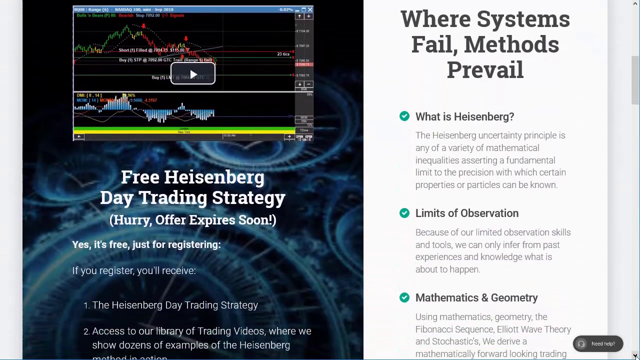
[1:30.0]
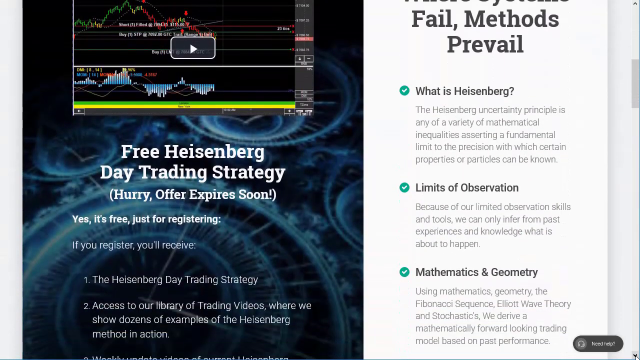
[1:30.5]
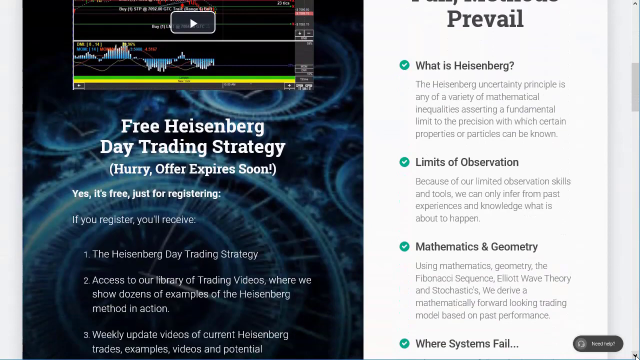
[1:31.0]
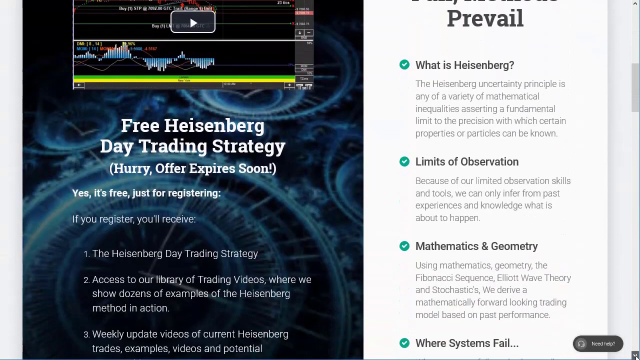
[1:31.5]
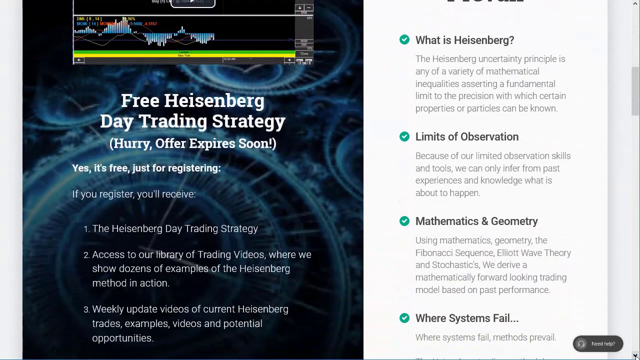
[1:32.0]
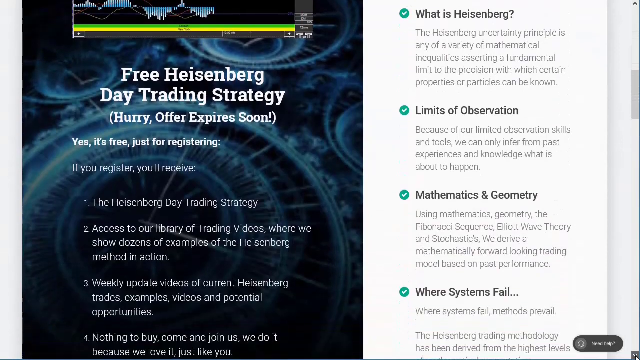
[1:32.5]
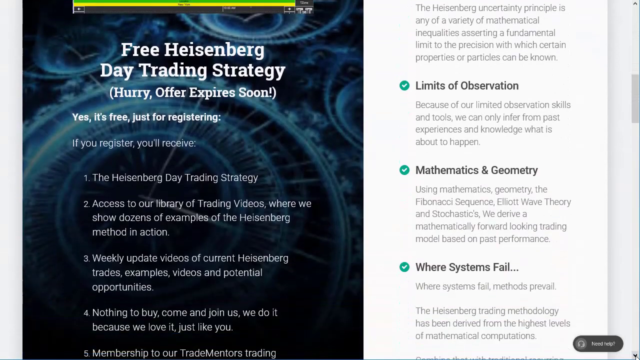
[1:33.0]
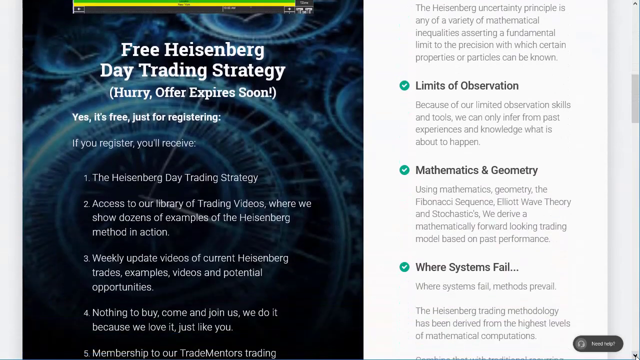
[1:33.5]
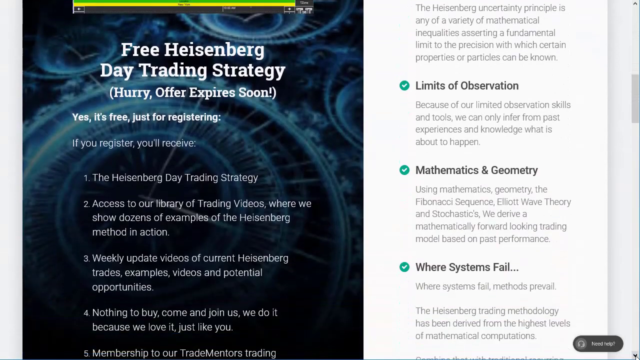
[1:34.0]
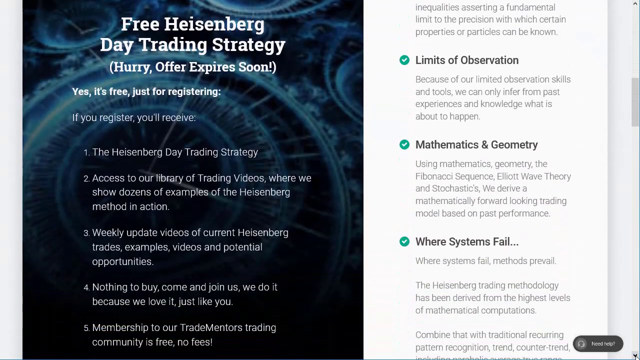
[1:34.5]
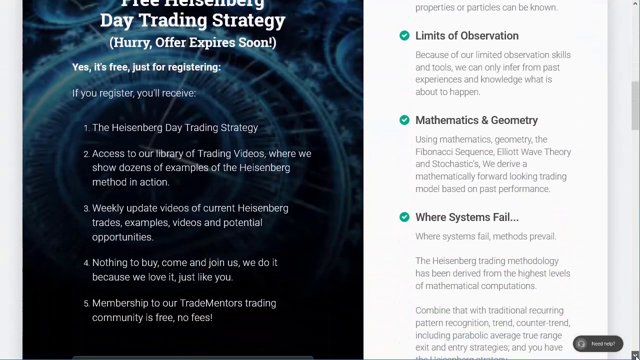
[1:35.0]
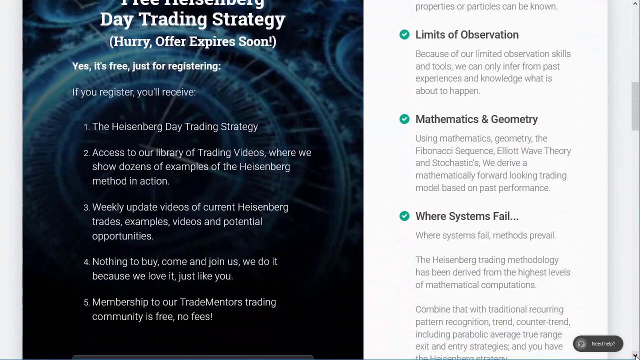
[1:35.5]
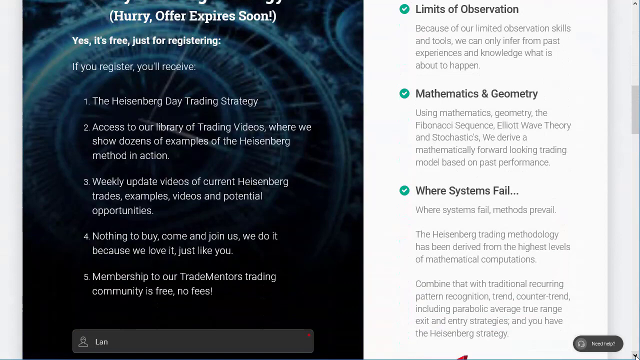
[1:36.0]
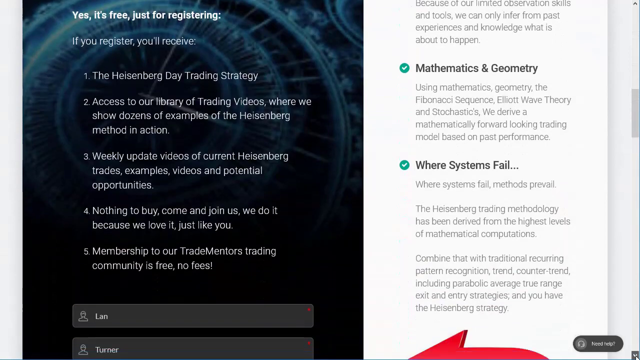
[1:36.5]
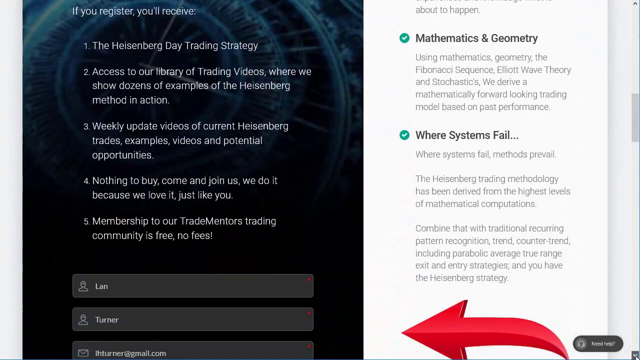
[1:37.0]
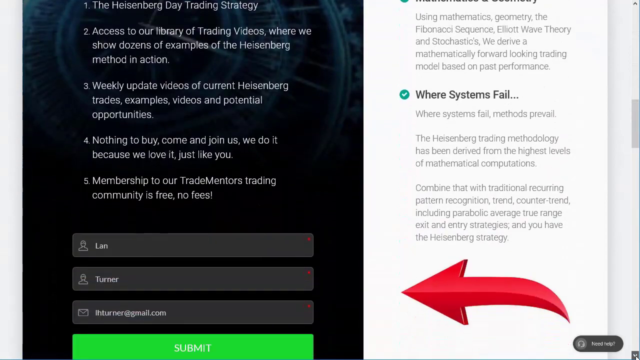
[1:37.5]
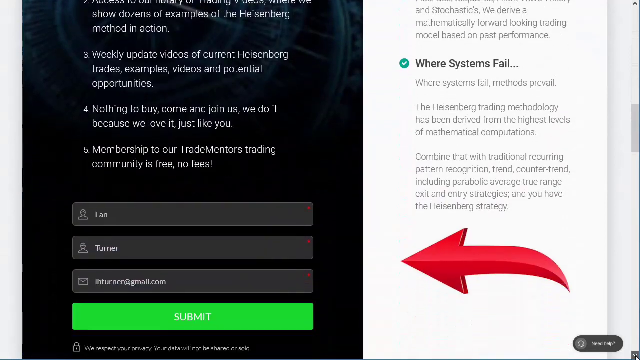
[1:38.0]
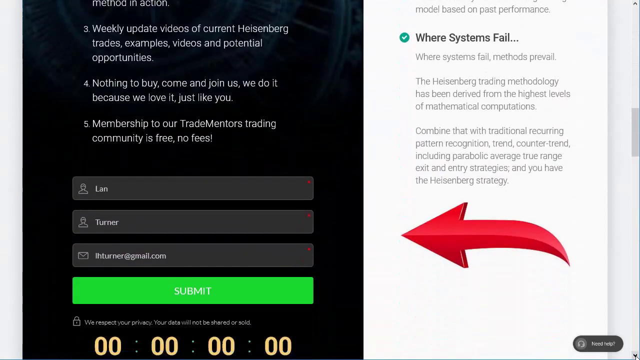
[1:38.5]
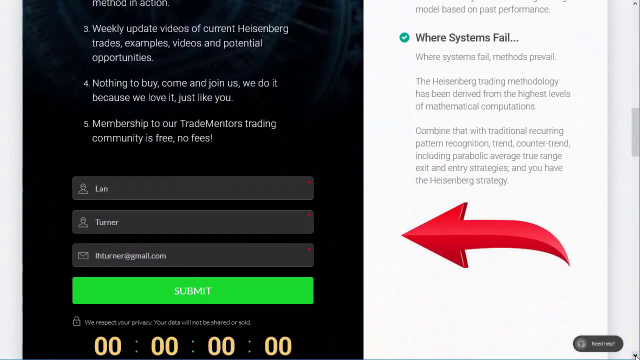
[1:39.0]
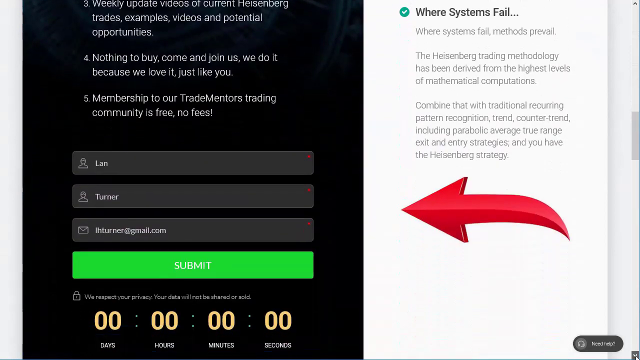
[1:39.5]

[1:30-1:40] What may be a website or a page from a website is shown. On the right side, the words "where systems fail, methods prevail" appear in large black font. Below them is the text "What is Heisenberg? The Heisenberg uncertainty principle is any of a variety of mathematical inequalities asserting a fundamental limit to the precision with which certain properties or particles can be known." Below that is "limits of observation", with text reading "because of our limited observation skills and tools we can only infer from past experiences and knowledge what is about to happen." Toward the left side are the words "Free Heisenberg Day Trading Strategy. Hurry, offer expires soon."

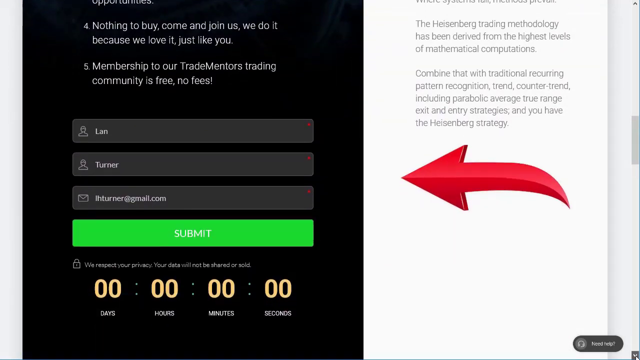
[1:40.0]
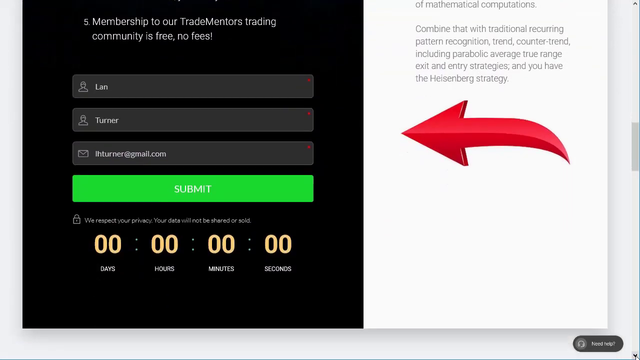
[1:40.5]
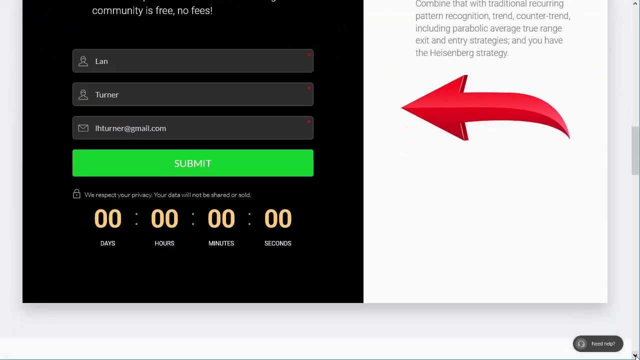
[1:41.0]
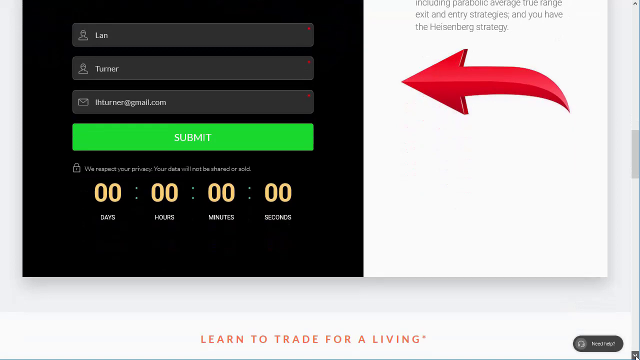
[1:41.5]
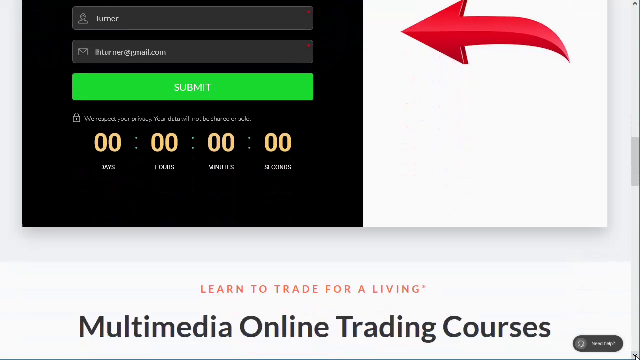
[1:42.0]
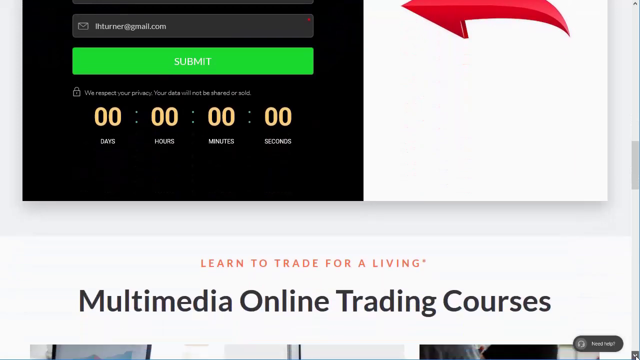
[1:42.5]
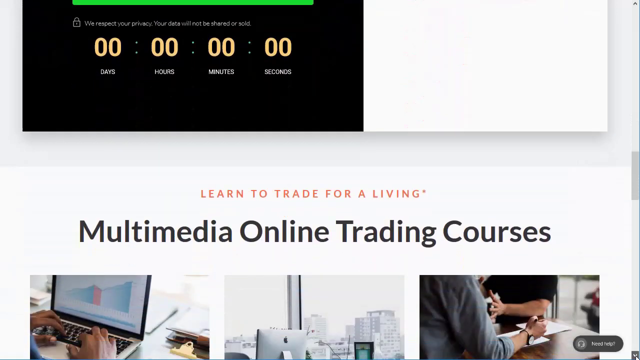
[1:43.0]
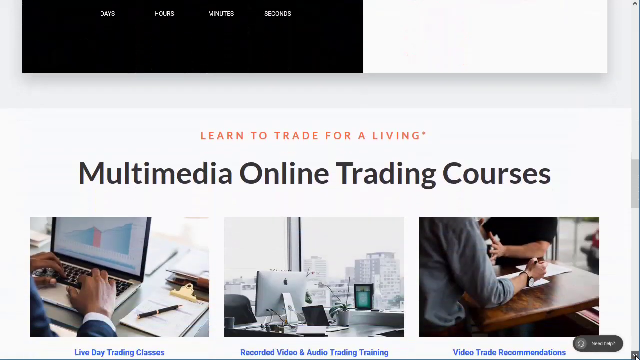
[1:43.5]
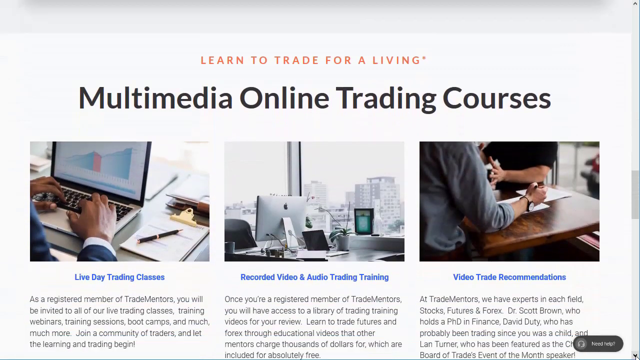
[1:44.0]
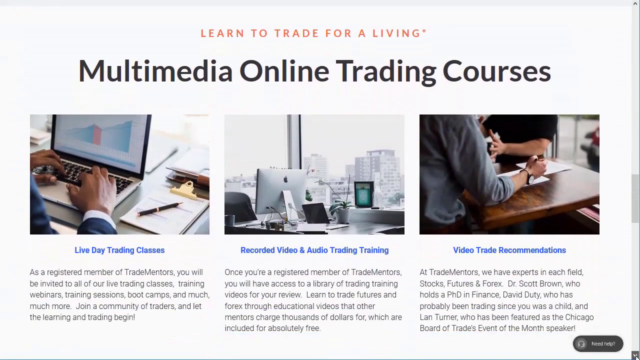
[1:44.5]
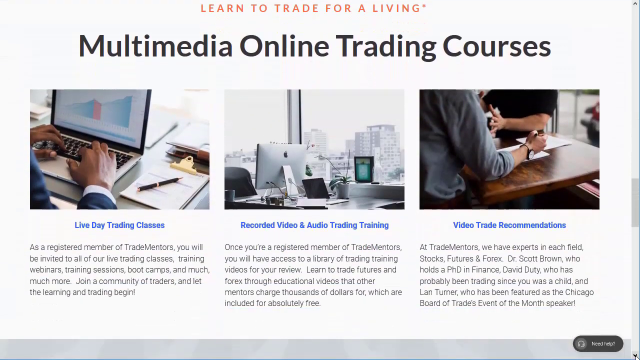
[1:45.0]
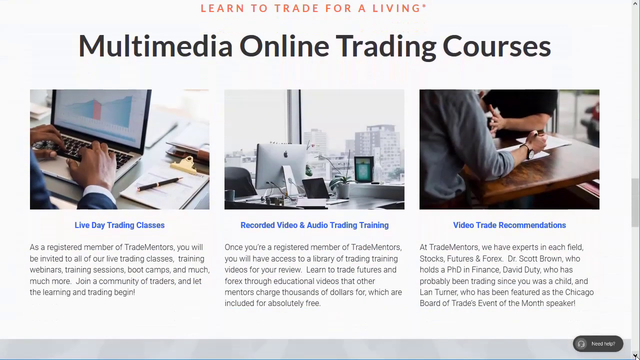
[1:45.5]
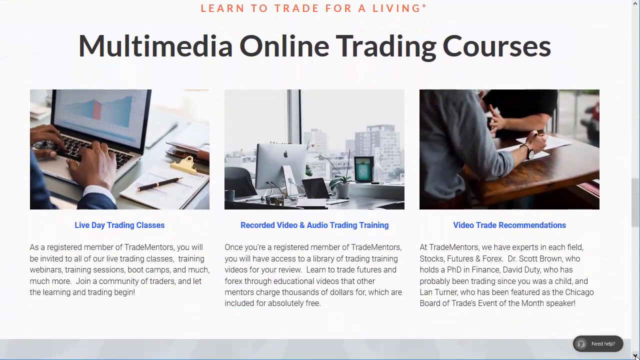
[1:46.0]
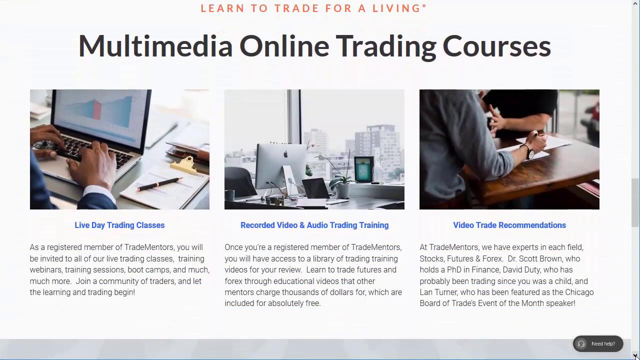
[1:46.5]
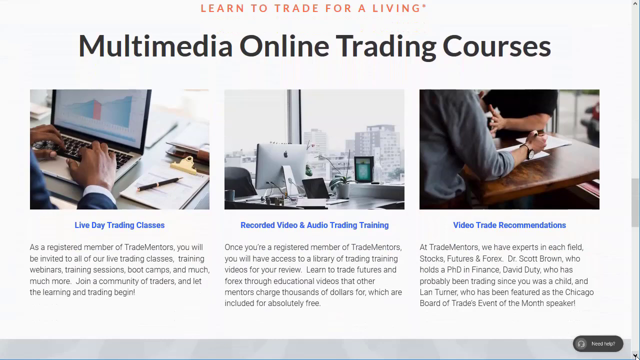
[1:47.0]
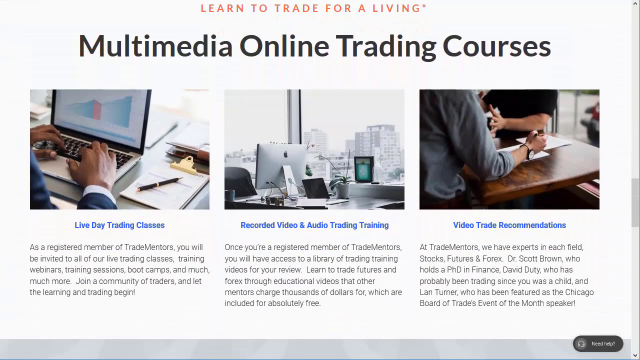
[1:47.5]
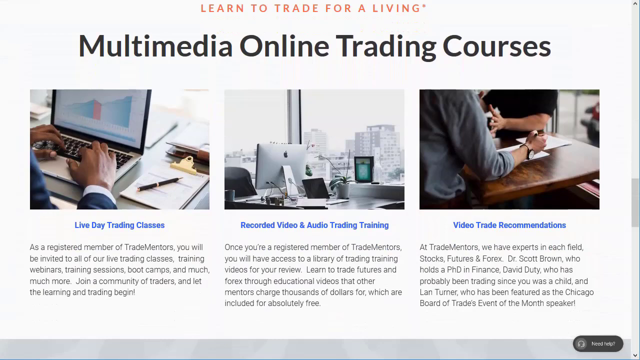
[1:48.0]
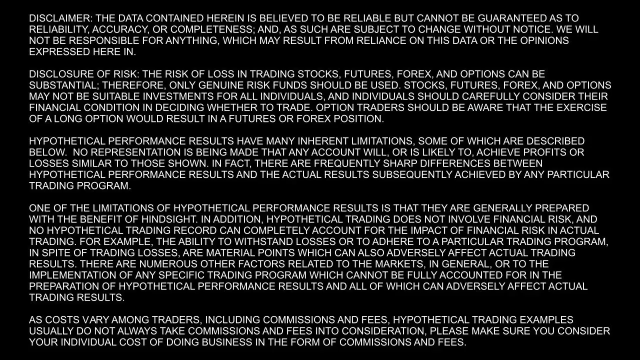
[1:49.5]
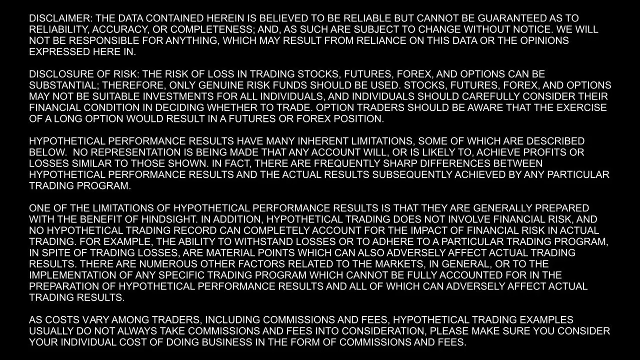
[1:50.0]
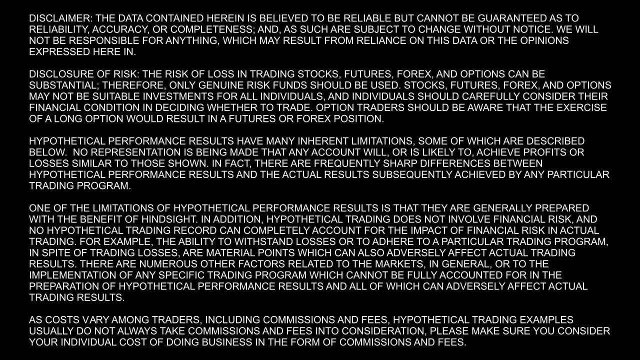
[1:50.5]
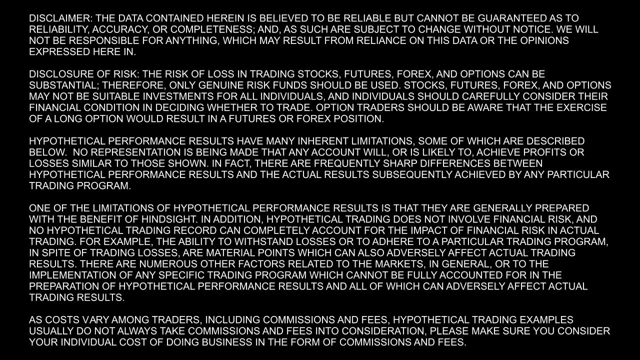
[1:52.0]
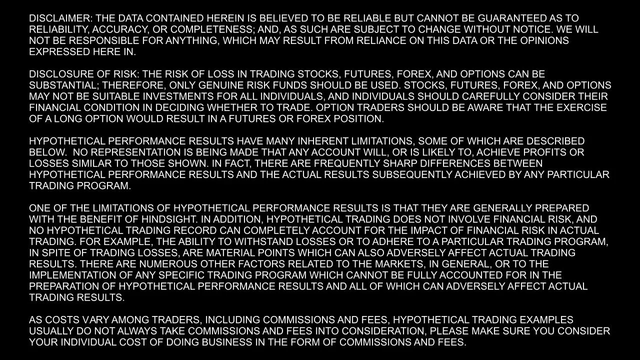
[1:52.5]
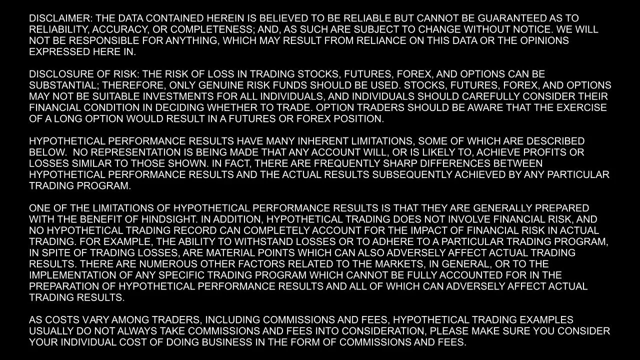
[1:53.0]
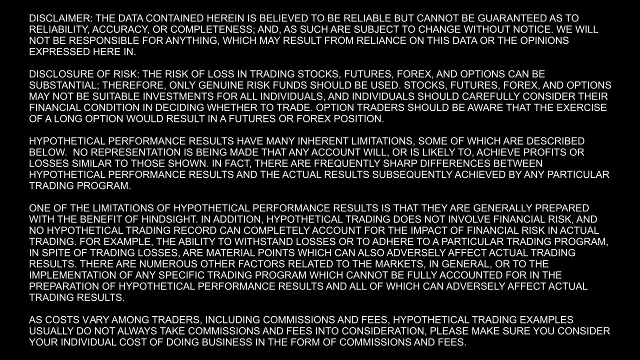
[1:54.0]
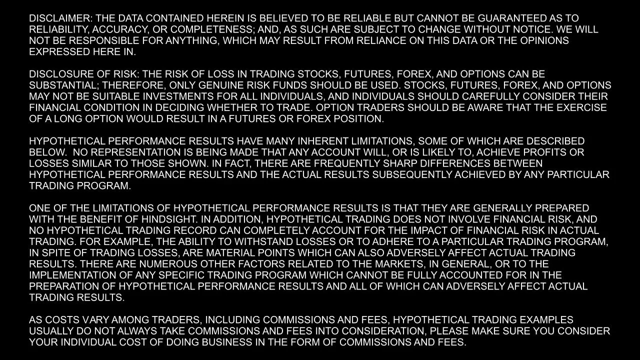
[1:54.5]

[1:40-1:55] What may be a page from a website or some type of document is shown. Toward the left side, the words read "Membership to our Trade Mentors Trading Community is free, no fees." Below are boxes for users to enter their information: the first says "Lan", the one below says "Turner", and the next contains an email address. Below them is a submit button in green or bright green, and below that the words "days, hours, minutes, seconds". The page is scrolled down to show the words "Multimedia Online Trading Course. Learn to trade for a living." along with information about the trading courses.